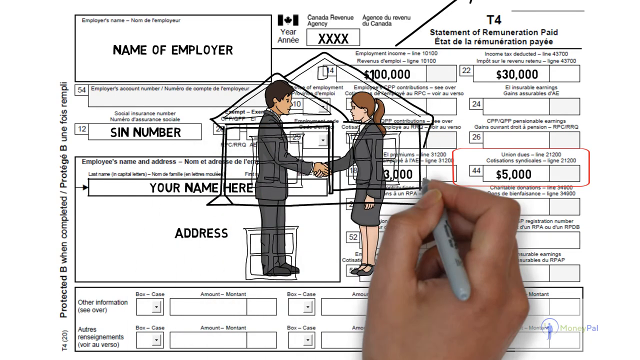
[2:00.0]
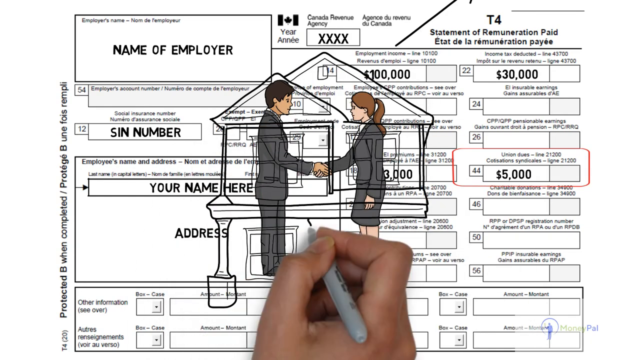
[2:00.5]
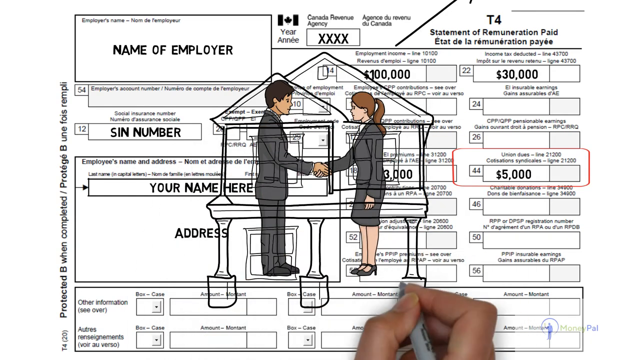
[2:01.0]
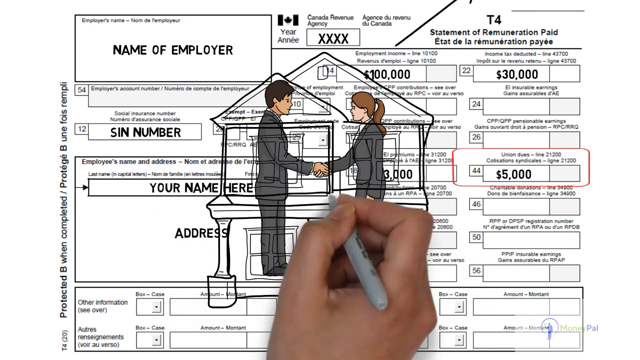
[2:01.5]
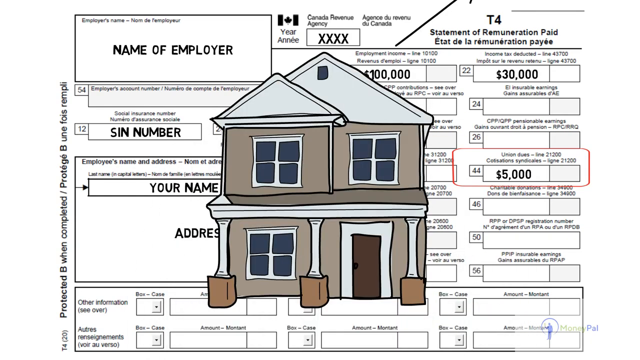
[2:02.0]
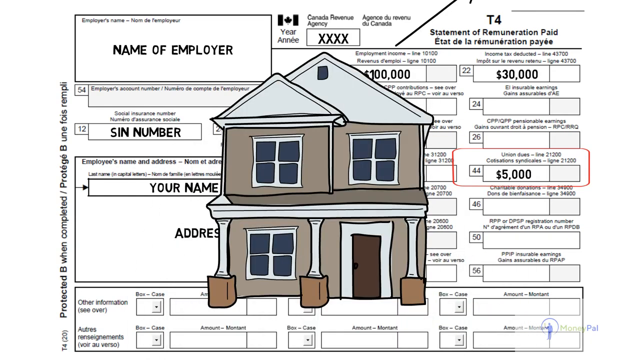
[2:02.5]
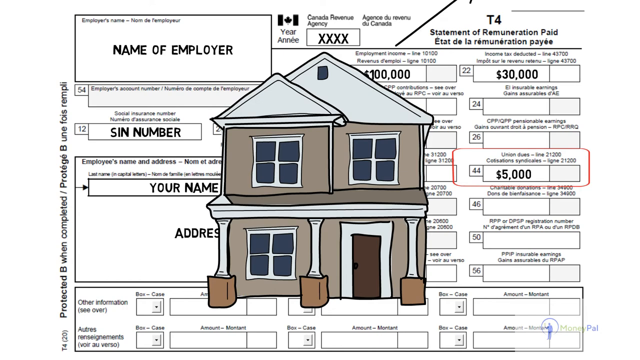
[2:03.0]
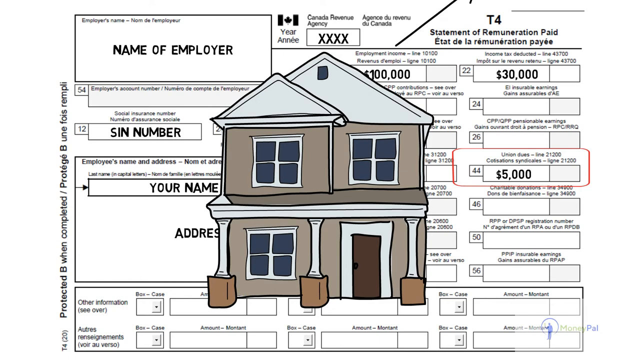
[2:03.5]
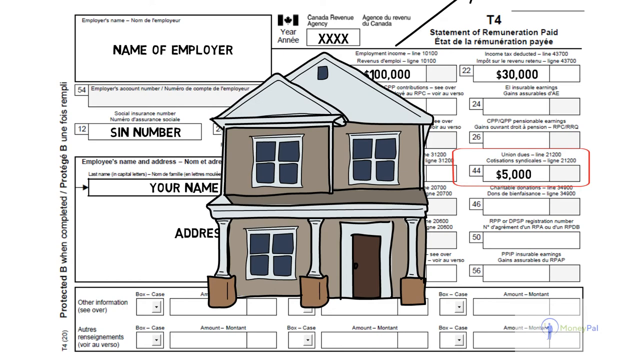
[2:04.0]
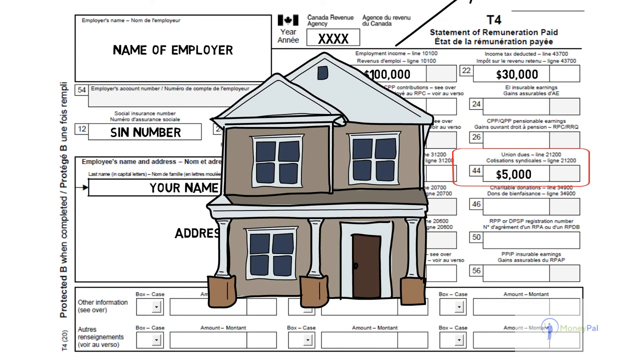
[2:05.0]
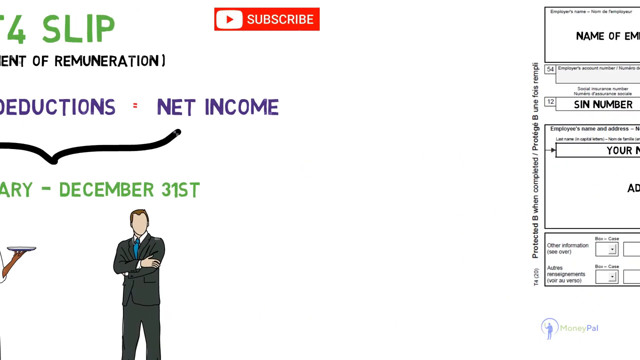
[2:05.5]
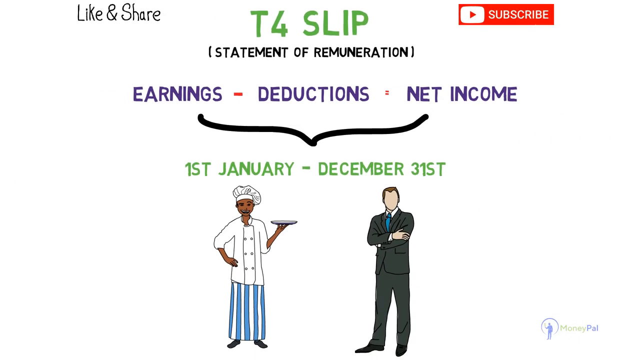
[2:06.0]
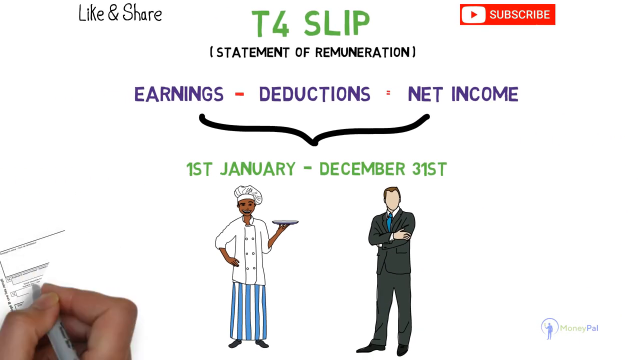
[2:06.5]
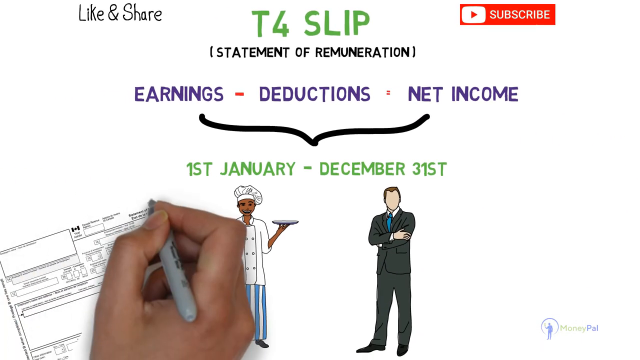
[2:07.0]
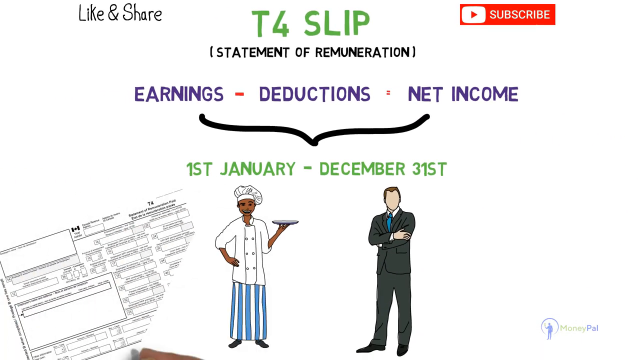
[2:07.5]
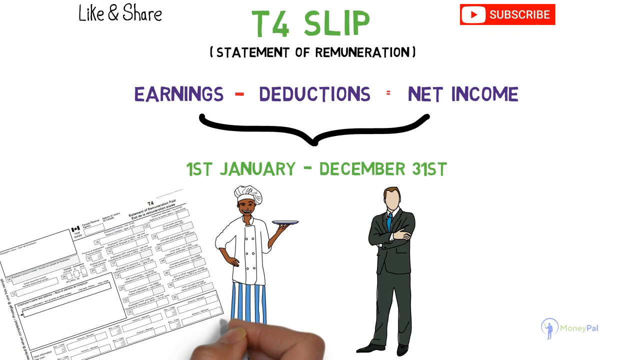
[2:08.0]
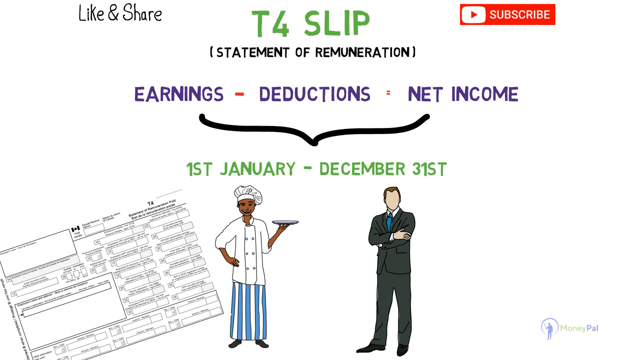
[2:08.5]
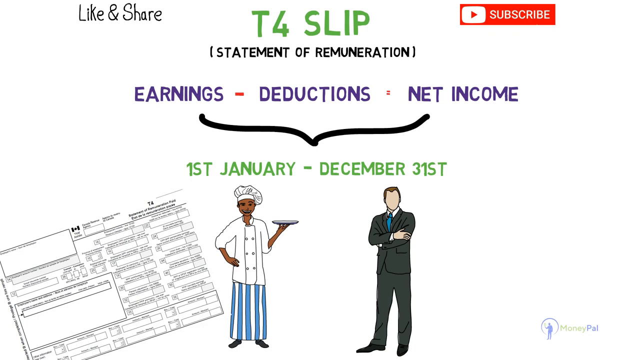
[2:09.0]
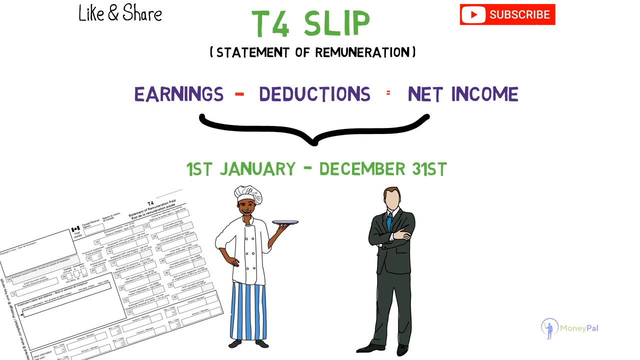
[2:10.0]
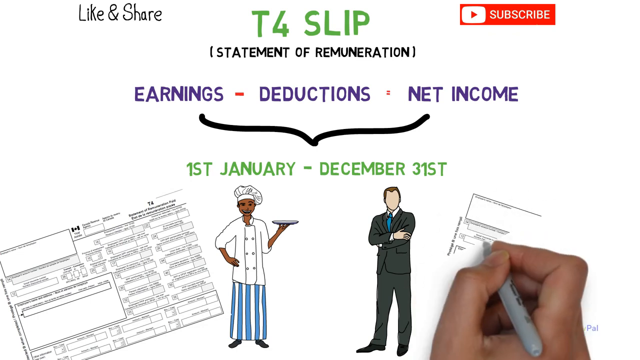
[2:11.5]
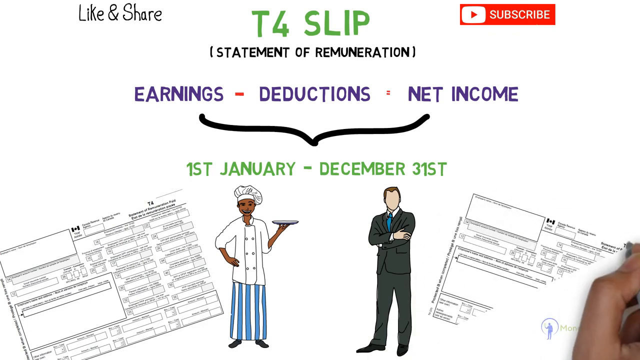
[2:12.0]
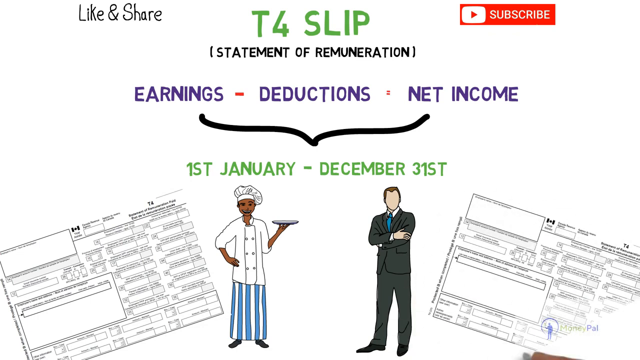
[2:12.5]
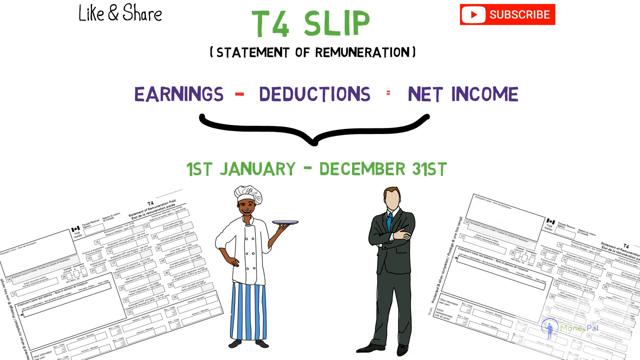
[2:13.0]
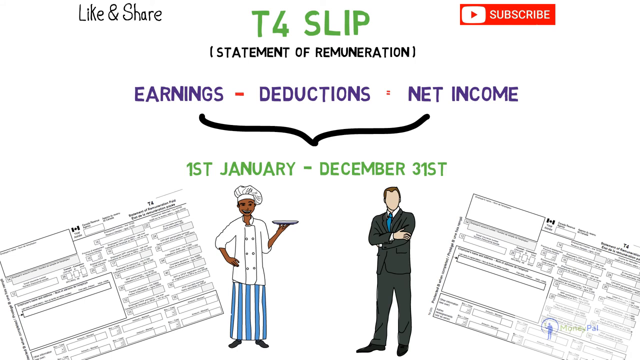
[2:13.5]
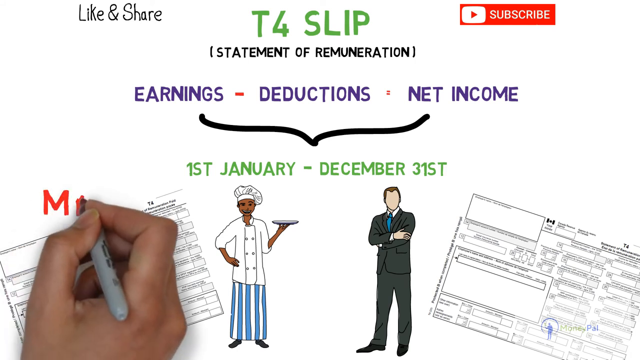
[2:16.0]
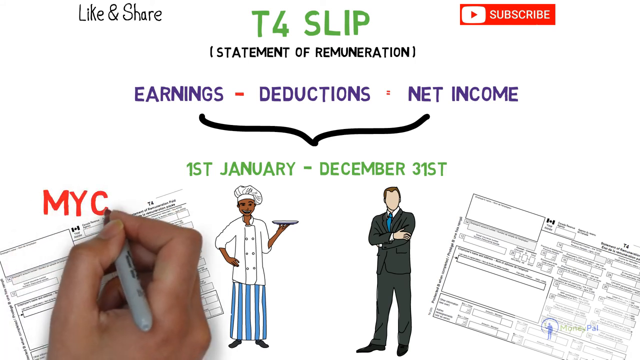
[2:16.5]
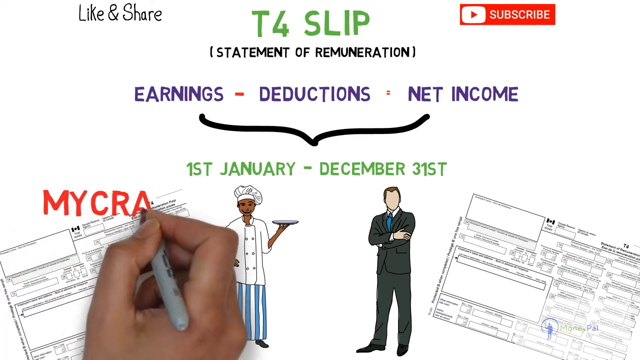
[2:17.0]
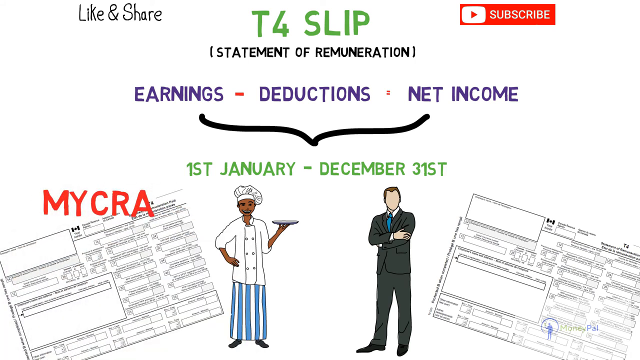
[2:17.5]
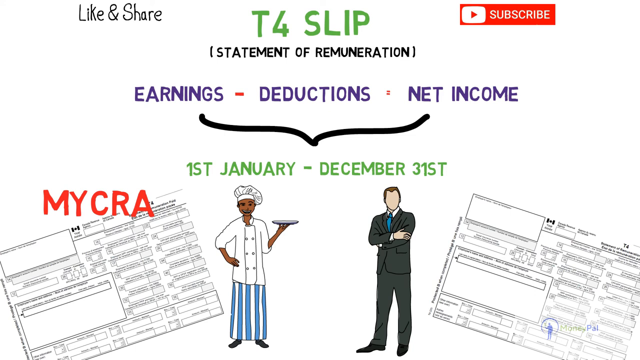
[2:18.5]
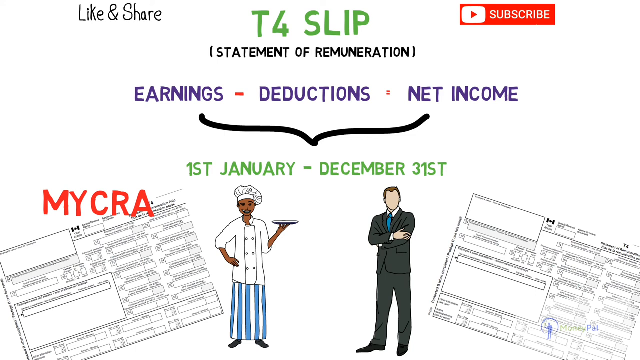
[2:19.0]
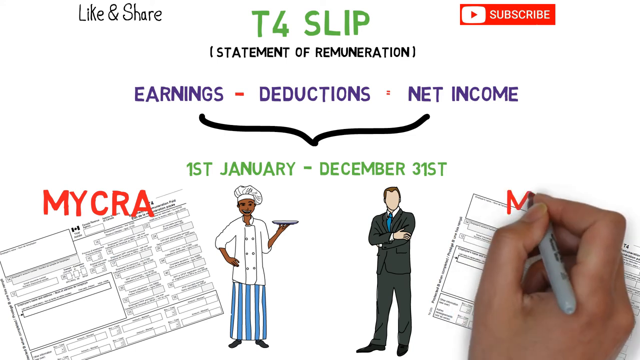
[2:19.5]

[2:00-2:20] The sketch of the two individuals, a man and a woman, is shown, and a house with two windows is sketched in front view. The house is not one-story: there is a door, a roof over the first floor, and what seems to be a second floor with its own roof. The scene fades out to the left, and the T4 slip screen appears. In the bottom left corner is a picture of a T4 slip, and on the right-hand side another T4 slip, where the person writes "MAMYCIA" and continues writing the same thing on the right-hand side before the section ends.